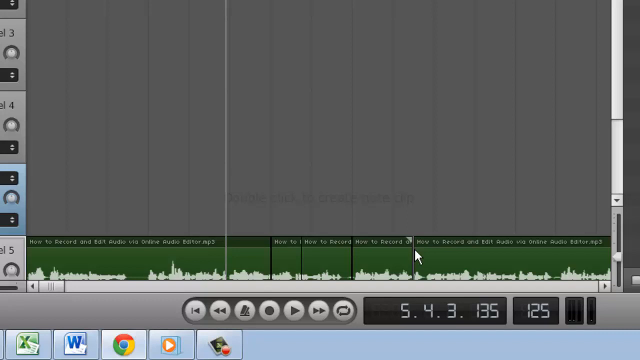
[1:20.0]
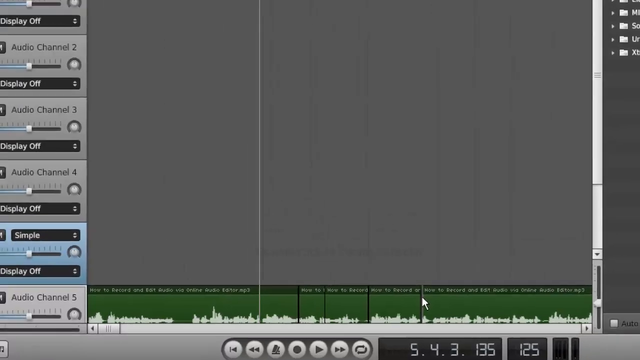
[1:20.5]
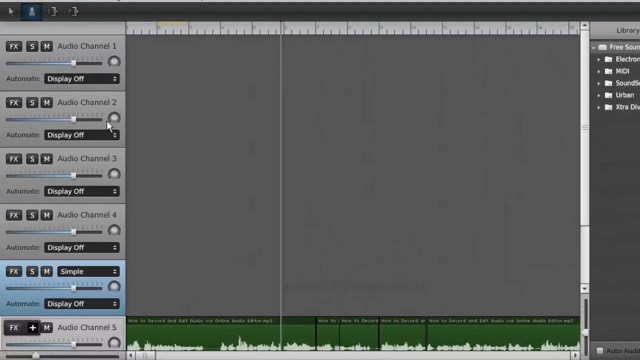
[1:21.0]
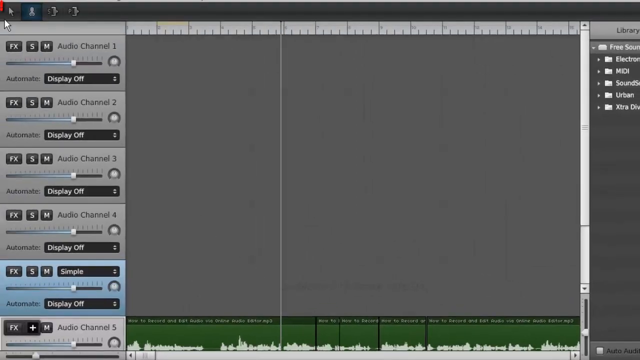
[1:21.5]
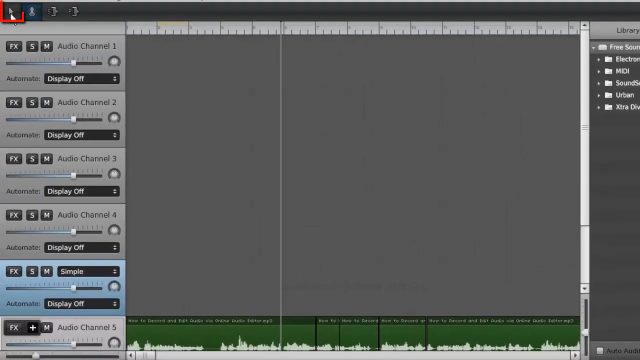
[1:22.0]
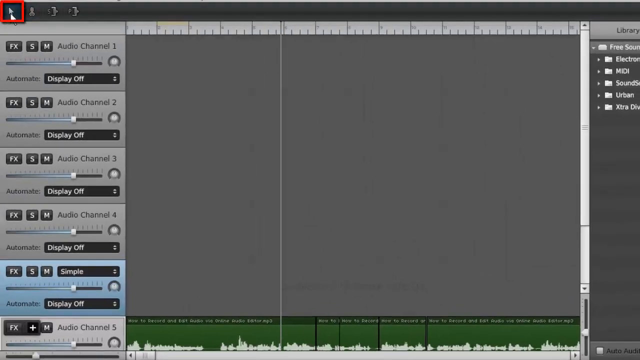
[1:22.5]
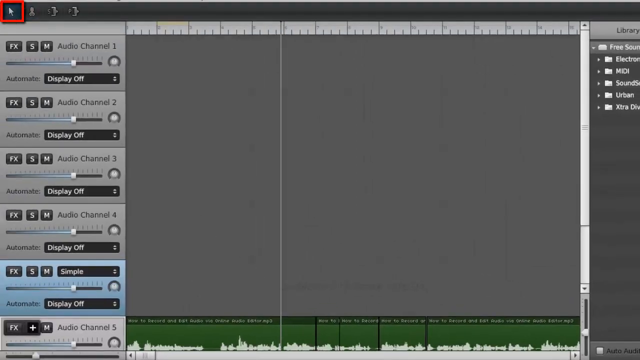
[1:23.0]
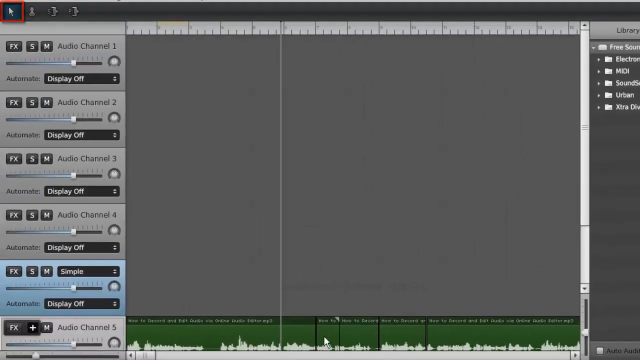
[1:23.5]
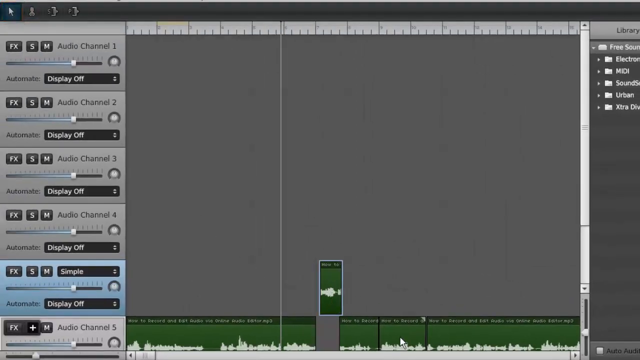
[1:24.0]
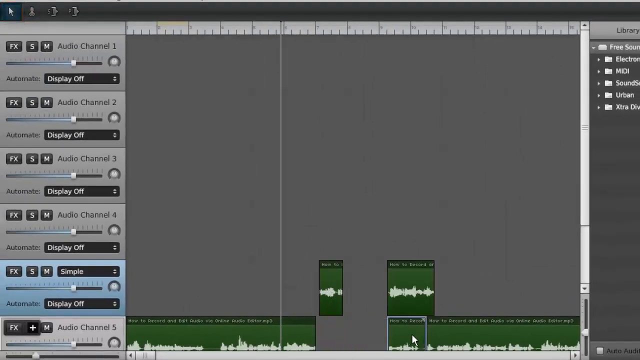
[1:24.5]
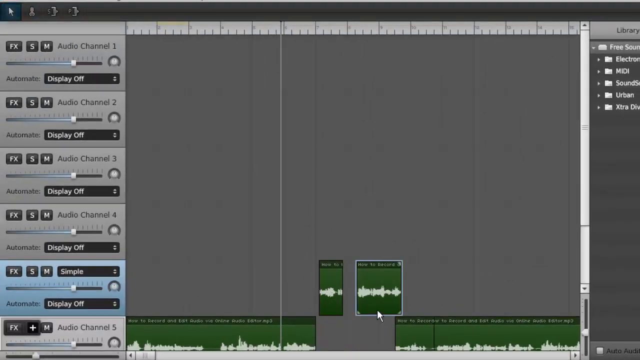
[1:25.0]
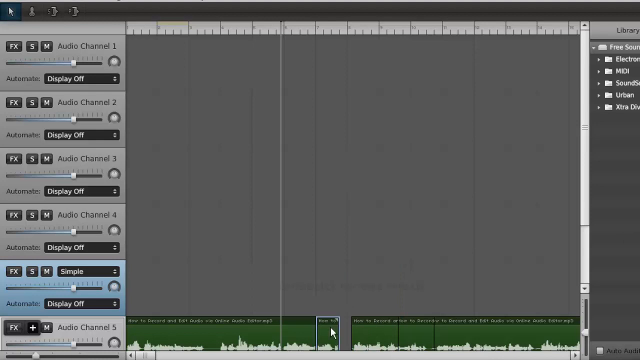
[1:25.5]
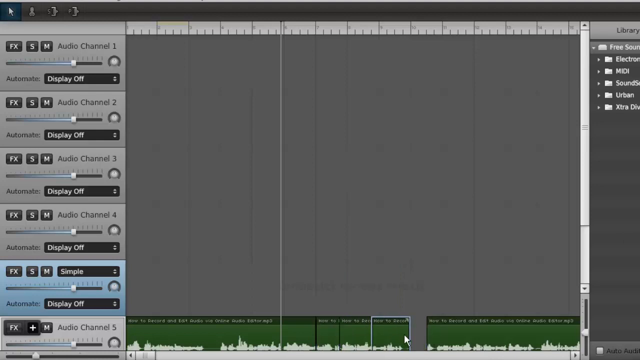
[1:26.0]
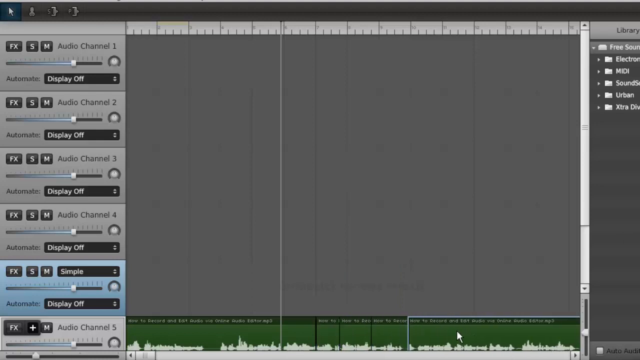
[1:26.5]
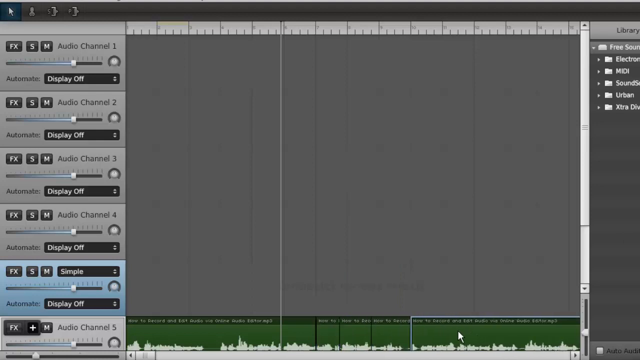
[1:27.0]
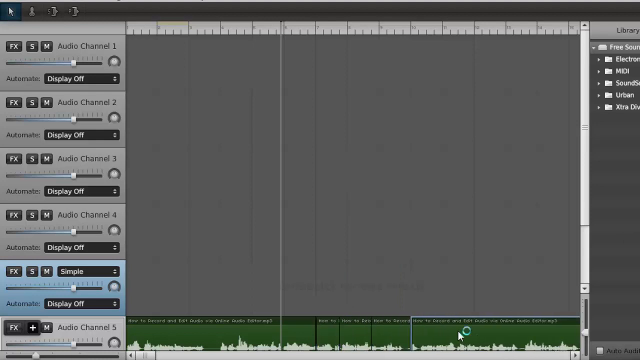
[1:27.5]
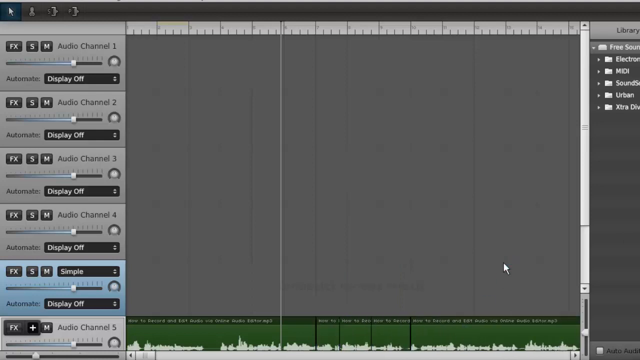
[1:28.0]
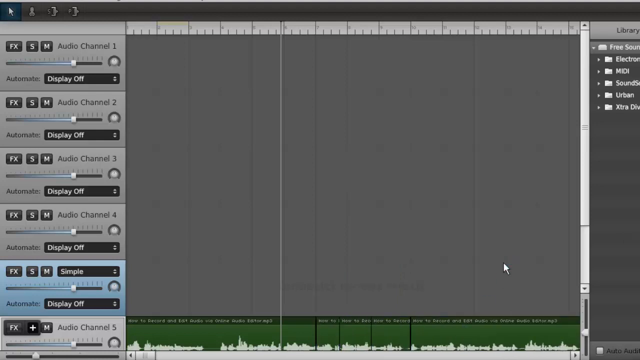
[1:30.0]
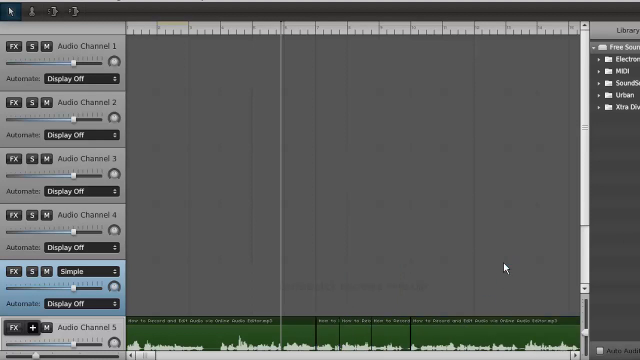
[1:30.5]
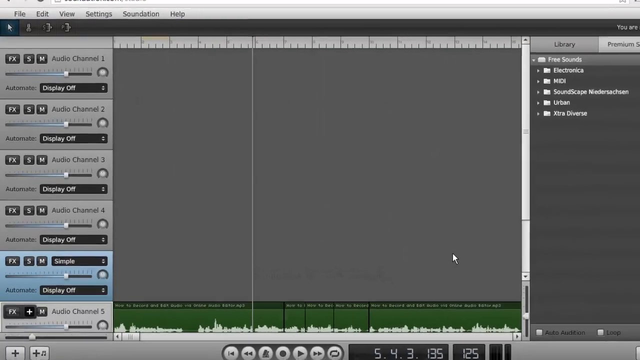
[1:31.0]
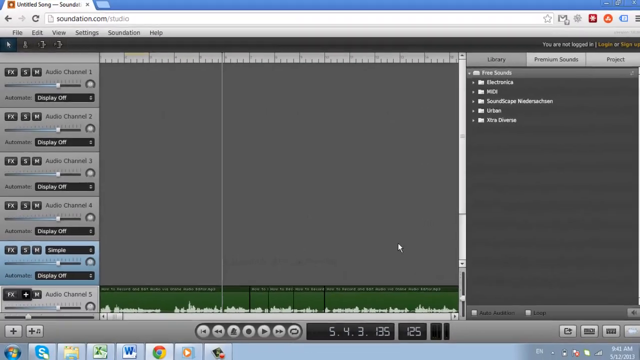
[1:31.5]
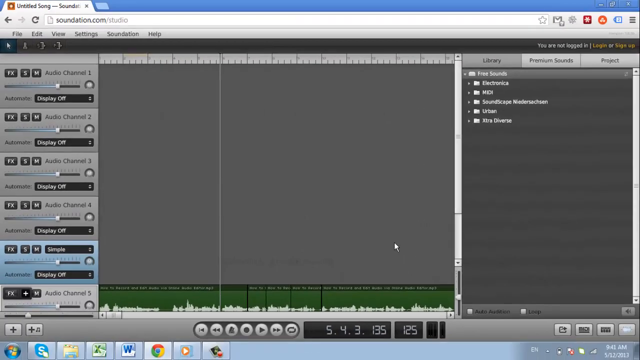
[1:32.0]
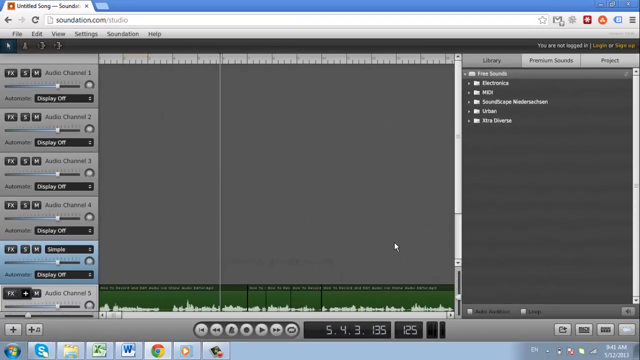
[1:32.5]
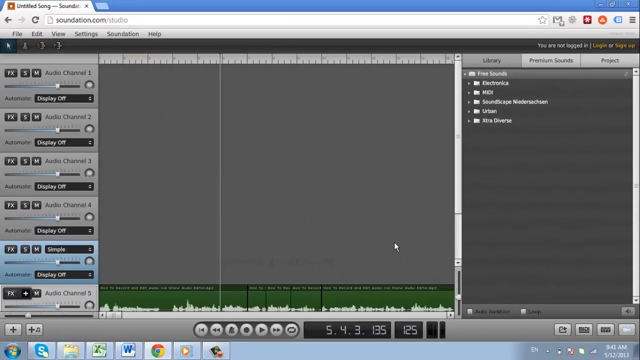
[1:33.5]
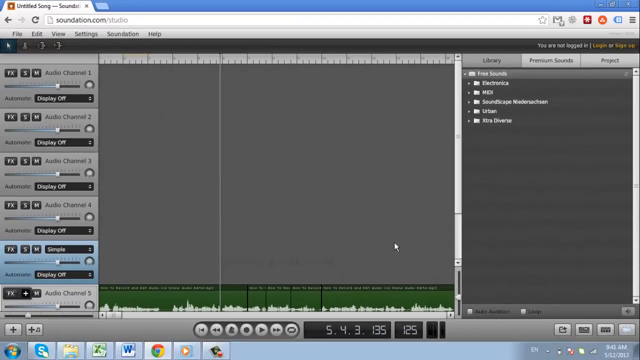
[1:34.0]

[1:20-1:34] The audio file in the mixer section named audio channel 5 is cut up into sections, with a thick black bar separating each section. The camera then zooms out to the top left options, and the user clicks on a button that appears to look like a mouse cursor. The user drags the various cut-up sections of the audio file to audio channel 4, rearranges them, and after mixing them up drags them back to audio channel 5. The camera zooms out, showing the full desktop once again.